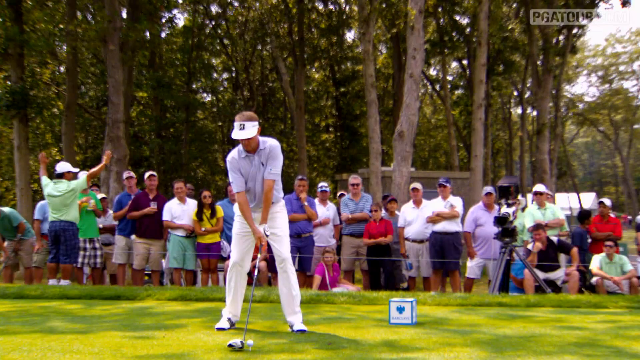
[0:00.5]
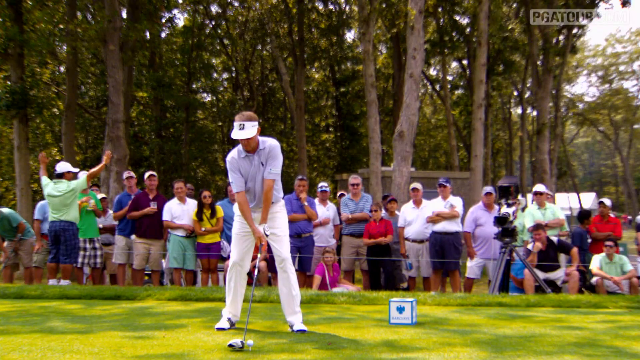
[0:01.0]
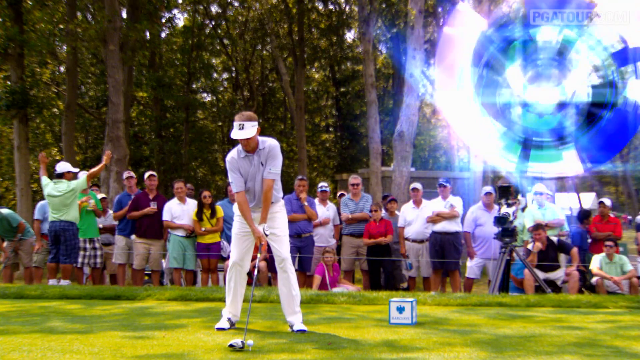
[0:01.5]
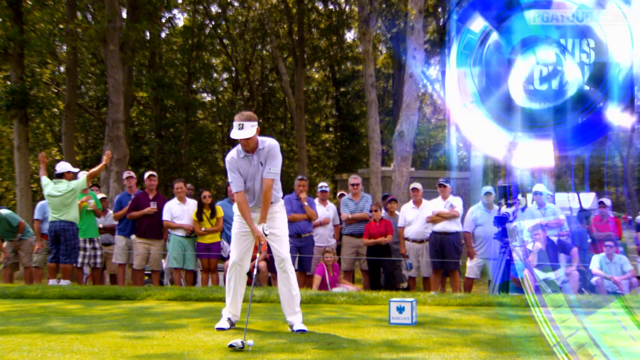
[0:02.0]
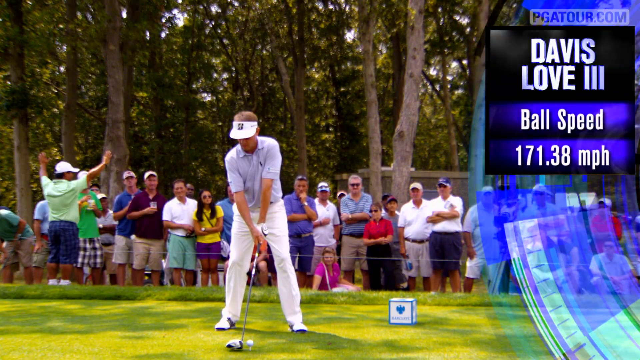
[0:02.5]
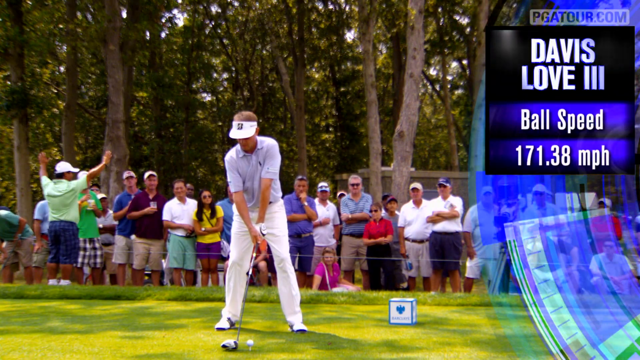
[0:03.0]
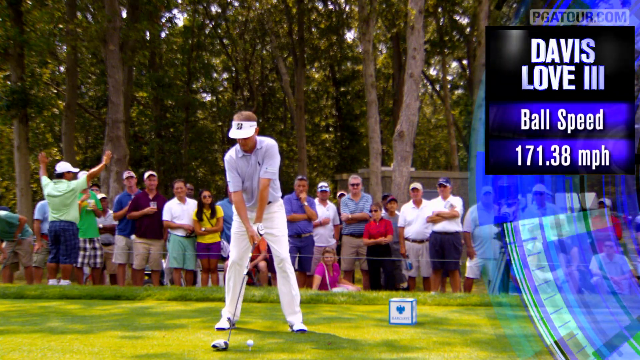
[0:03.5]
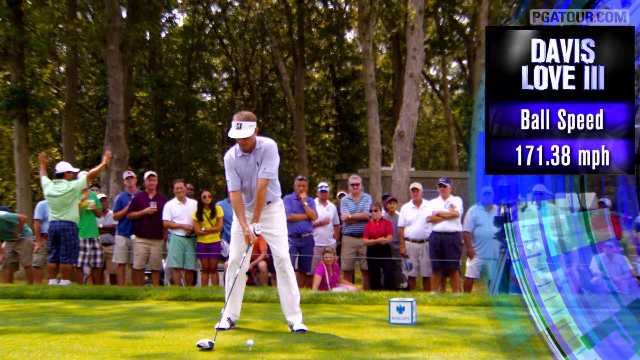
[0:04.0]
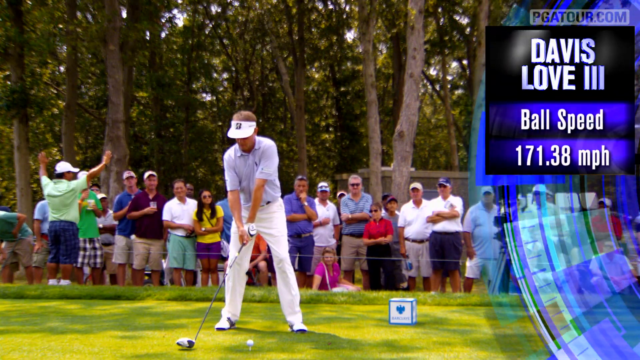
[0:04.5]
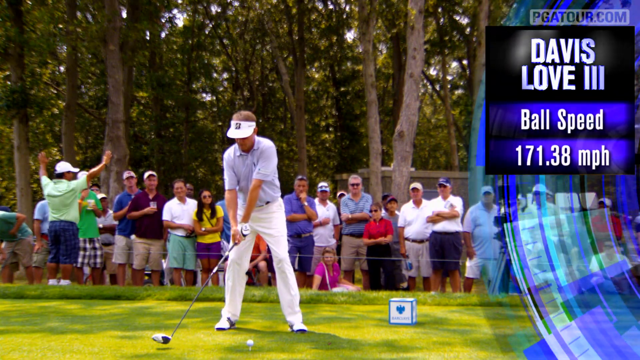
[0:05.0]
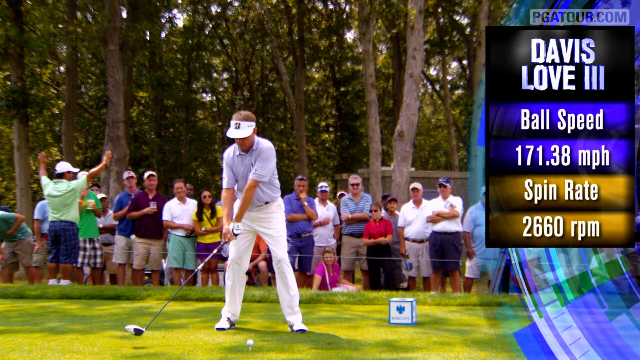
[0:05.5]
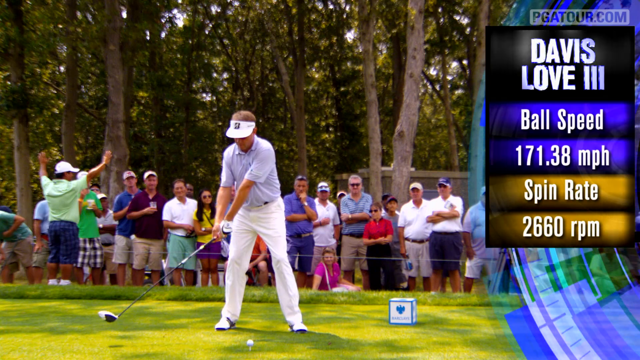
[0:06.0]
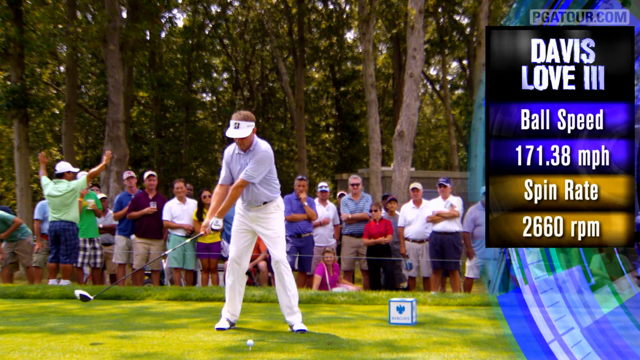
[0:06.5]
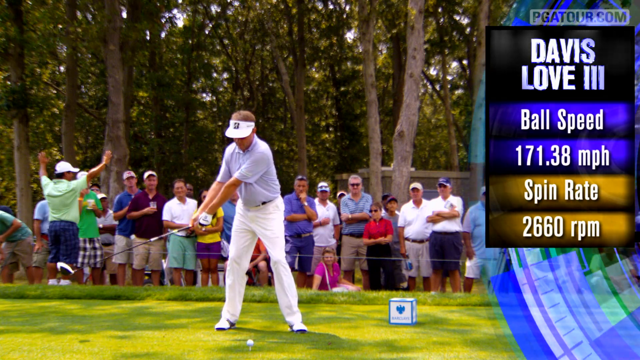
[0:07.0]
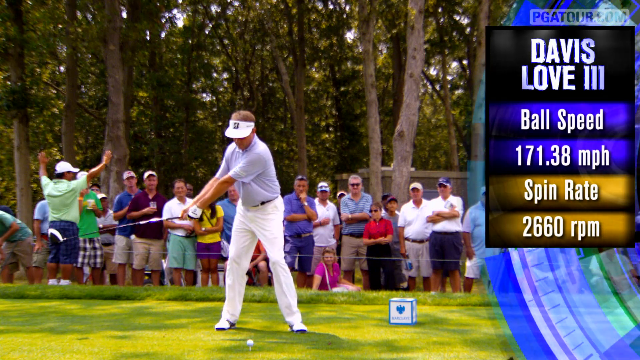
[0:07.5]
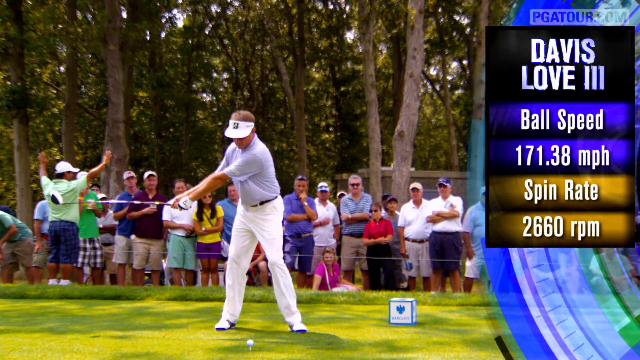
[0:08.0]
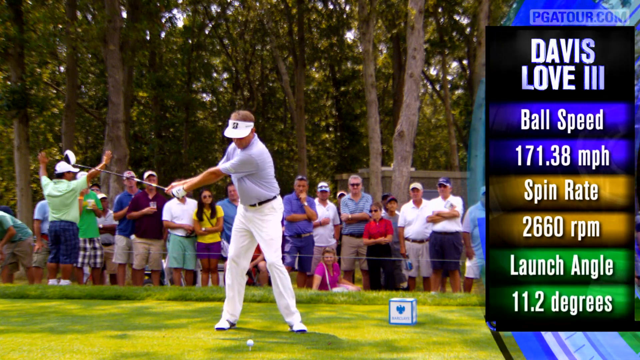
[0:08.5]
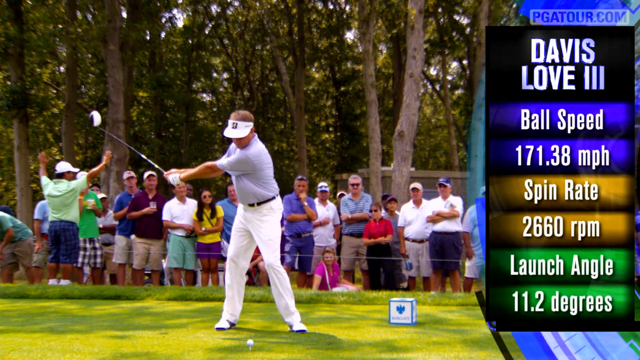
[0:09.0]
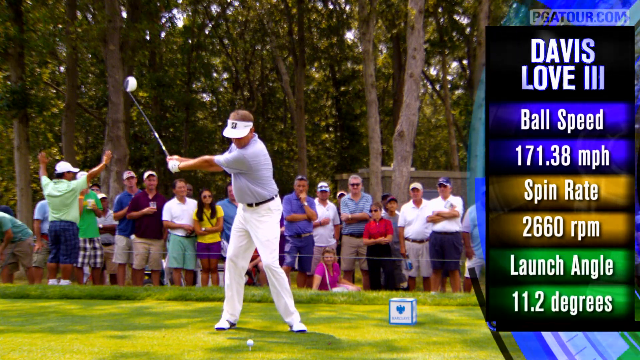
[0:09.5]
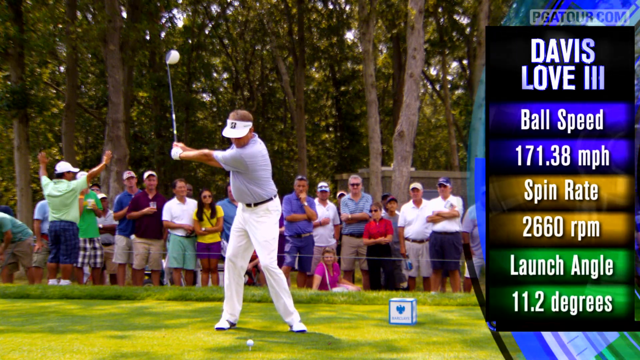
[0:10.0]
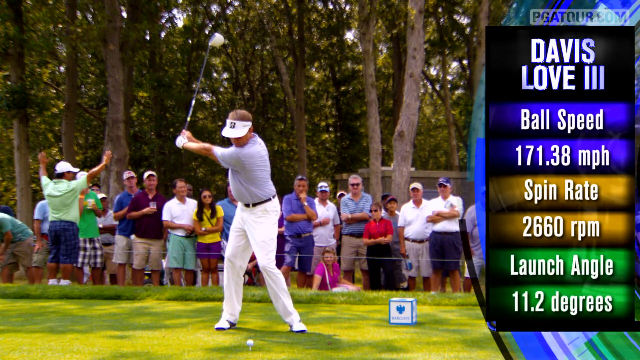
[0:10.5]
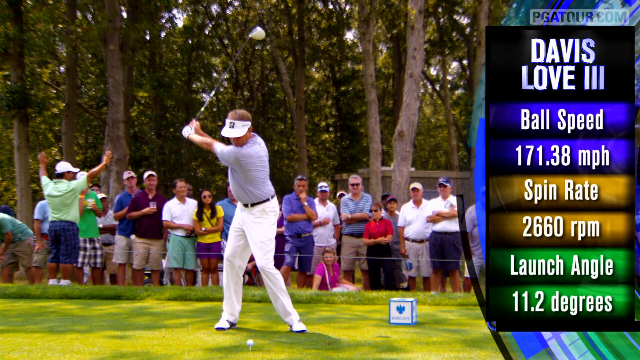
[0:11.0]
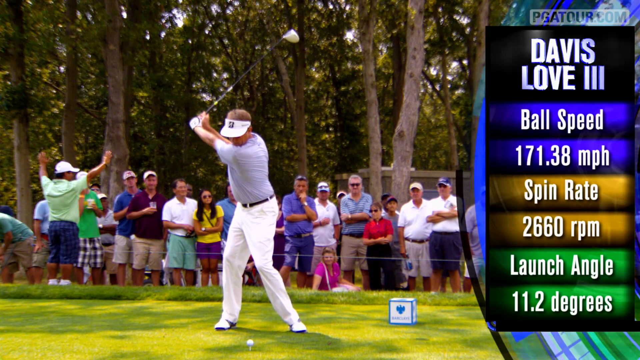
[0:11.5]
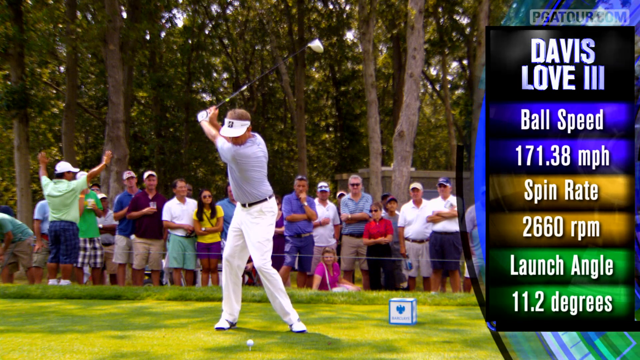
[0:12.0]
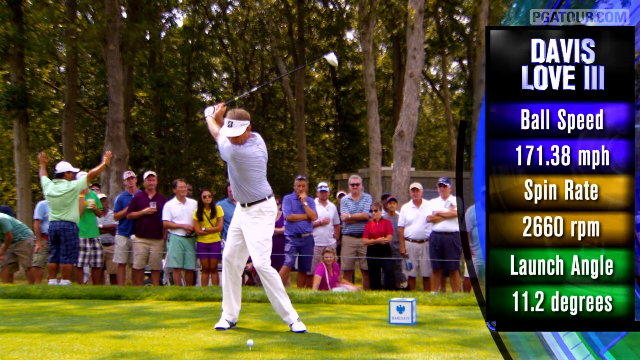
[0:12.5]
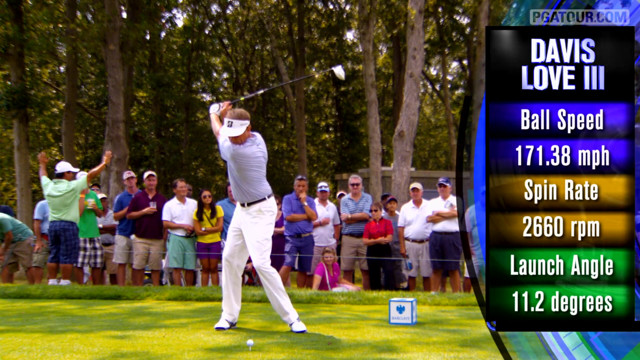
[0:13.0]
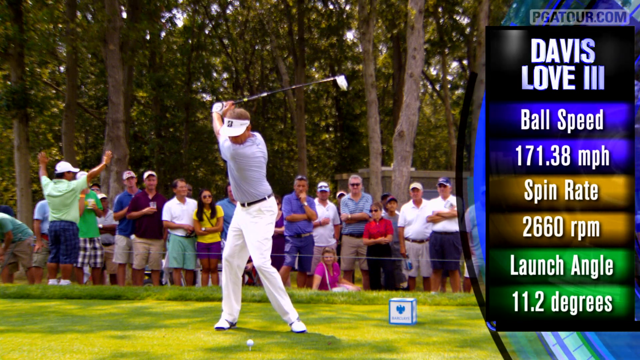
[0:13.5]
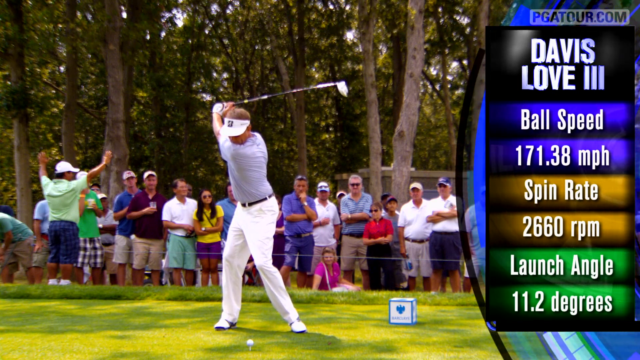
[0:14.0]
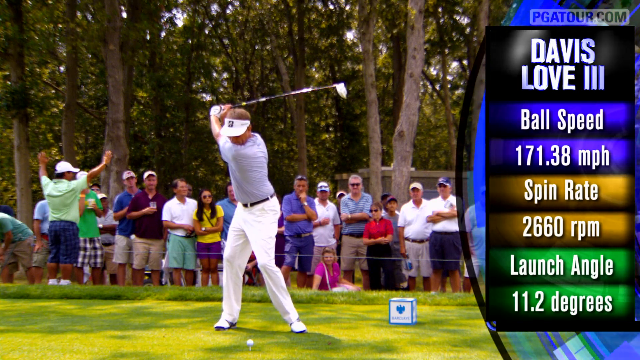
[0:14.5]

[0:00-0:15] A golfer who looks kind of old wears a purple polo, white pants, white shoes and a white visor. Audience members are in the background, mostly older men but some women as well, with several trees behind them. Text on the top right reads "Davis Love III, ball speed 171.38 miles per hour." In slow motion, he gets ready to swing, bringing back his driver and then starting his swing. The ground is very green and cleanly mowed, and the golf ball is sitting on the tee. A man in the background has his arms up, telling the audience not to make any noise.